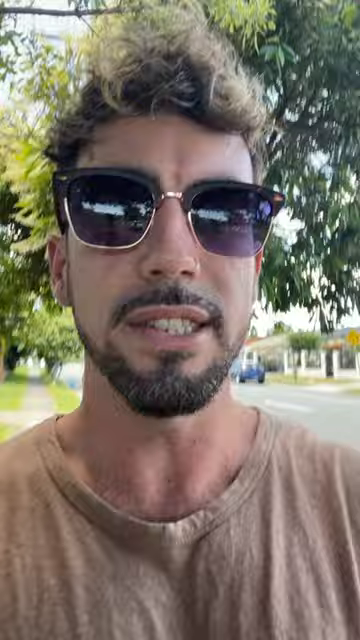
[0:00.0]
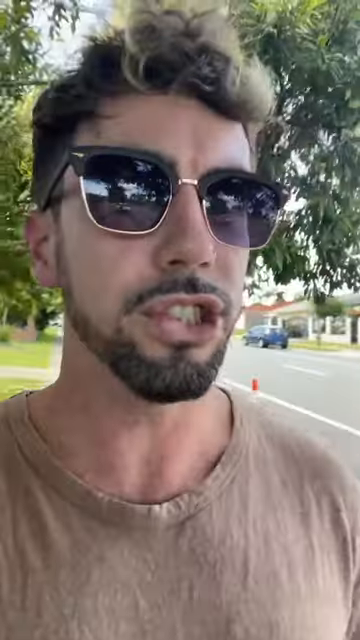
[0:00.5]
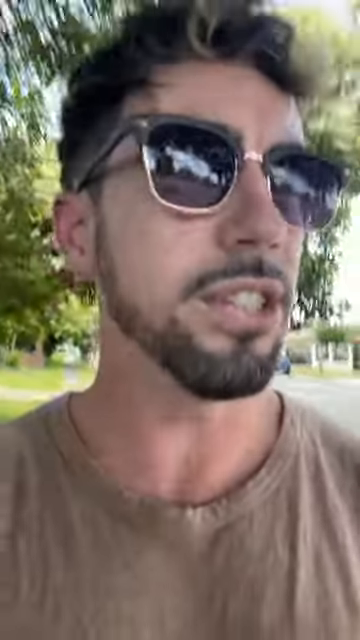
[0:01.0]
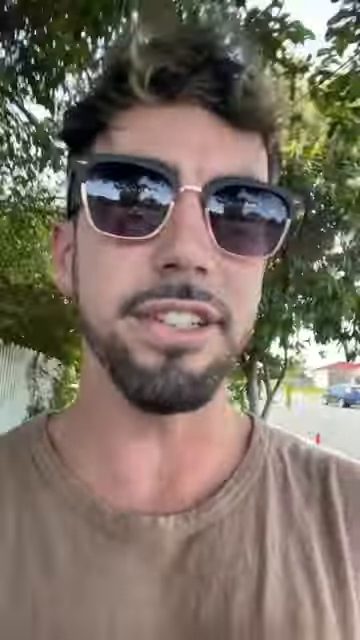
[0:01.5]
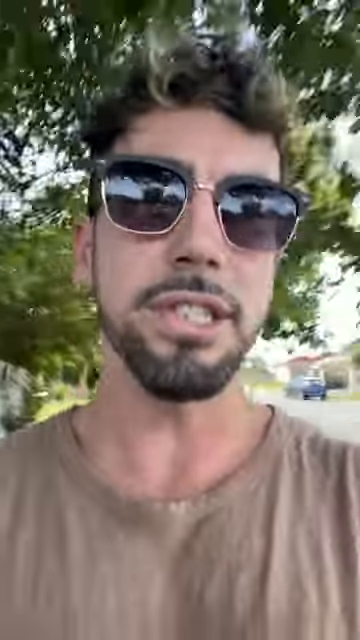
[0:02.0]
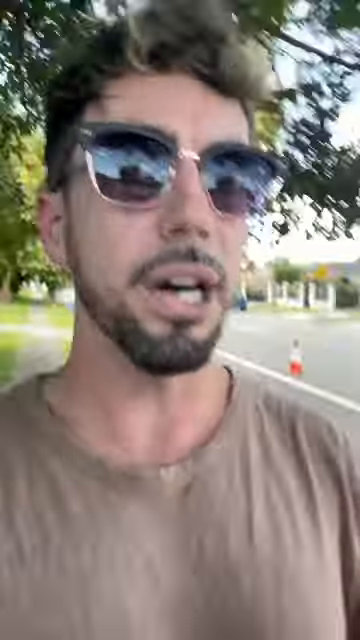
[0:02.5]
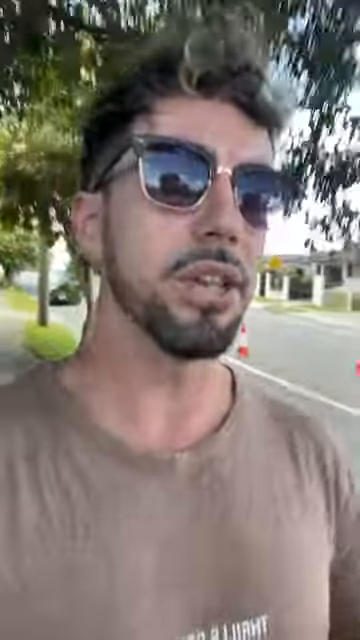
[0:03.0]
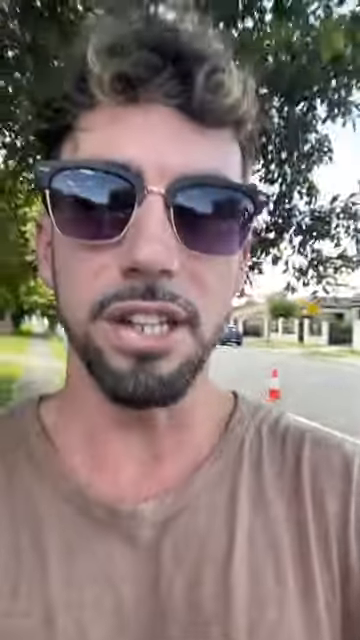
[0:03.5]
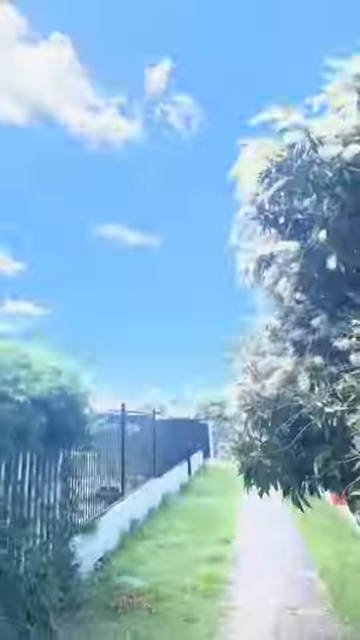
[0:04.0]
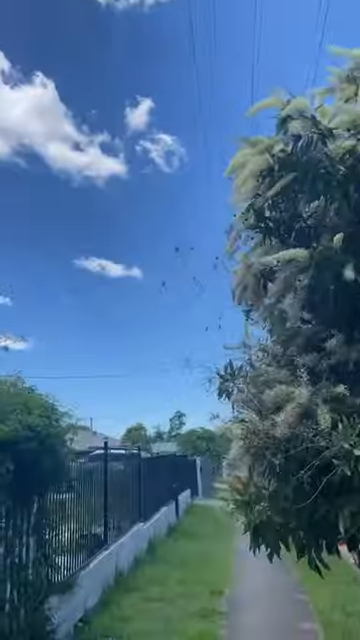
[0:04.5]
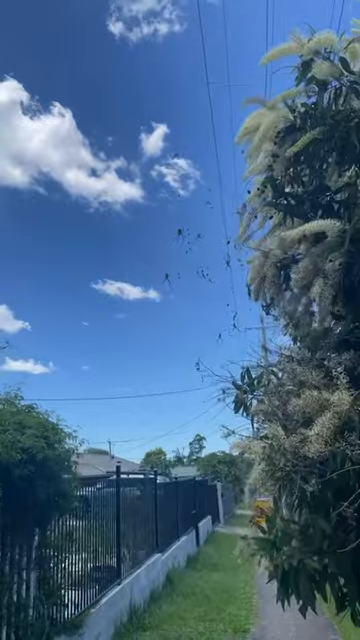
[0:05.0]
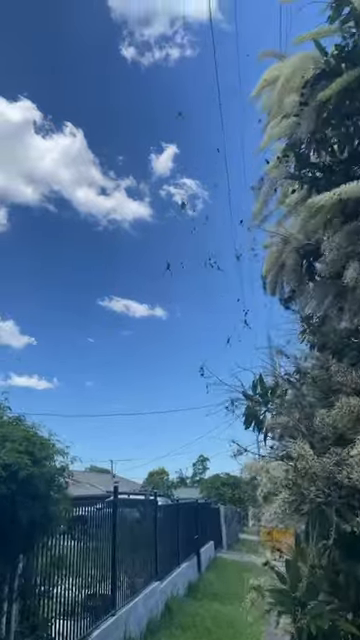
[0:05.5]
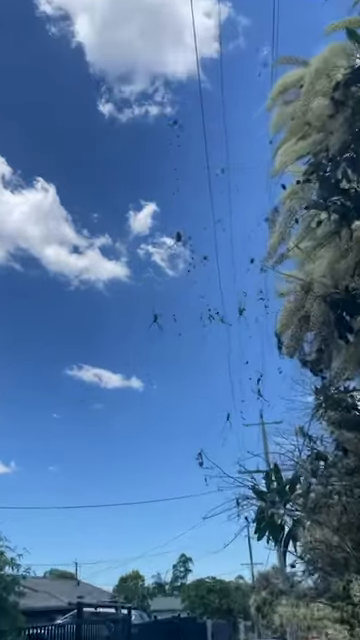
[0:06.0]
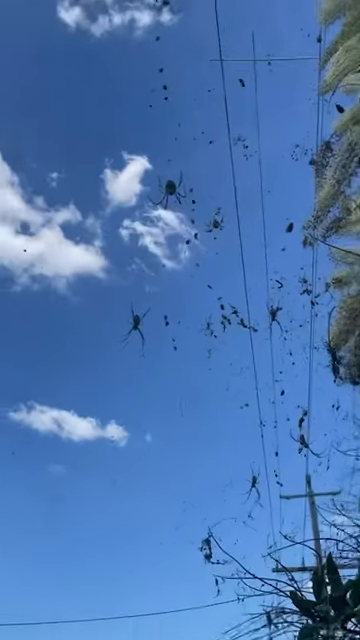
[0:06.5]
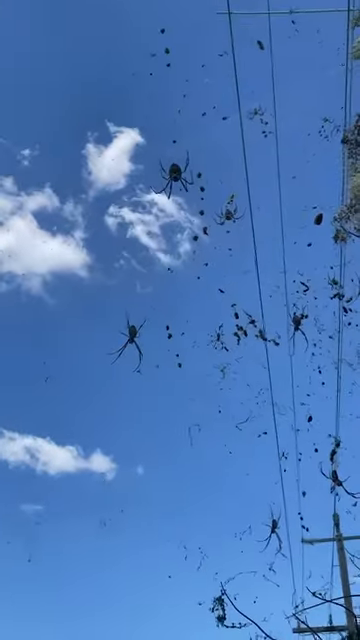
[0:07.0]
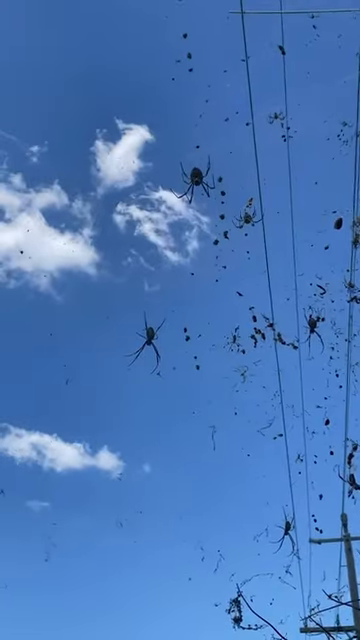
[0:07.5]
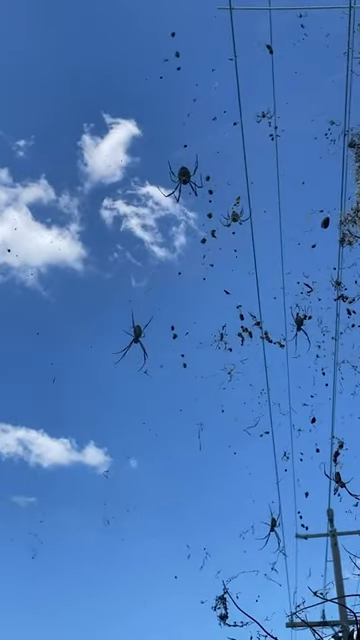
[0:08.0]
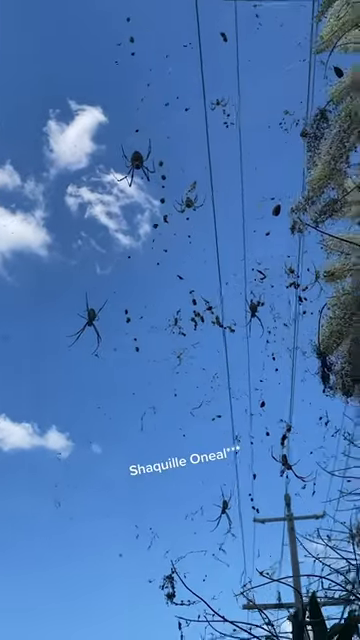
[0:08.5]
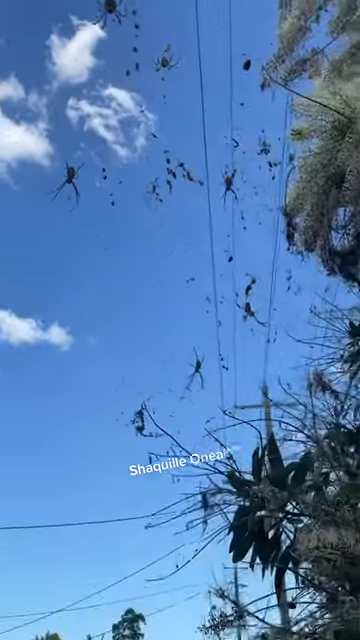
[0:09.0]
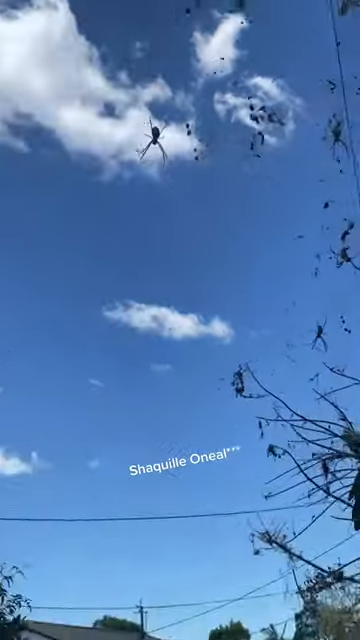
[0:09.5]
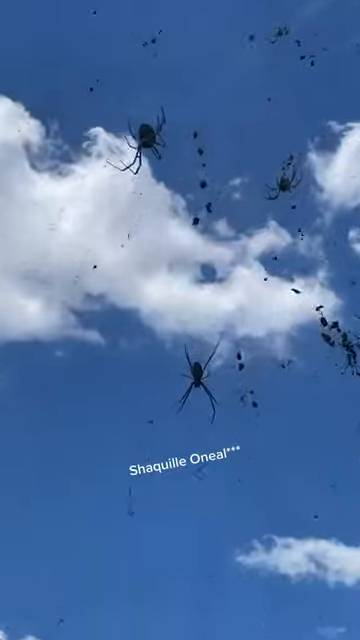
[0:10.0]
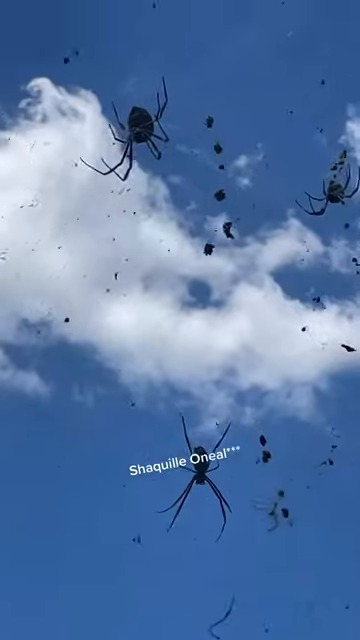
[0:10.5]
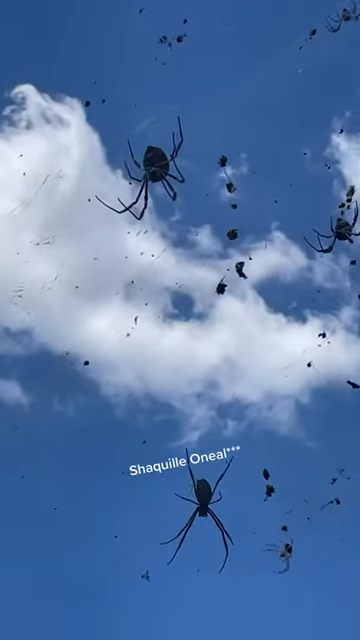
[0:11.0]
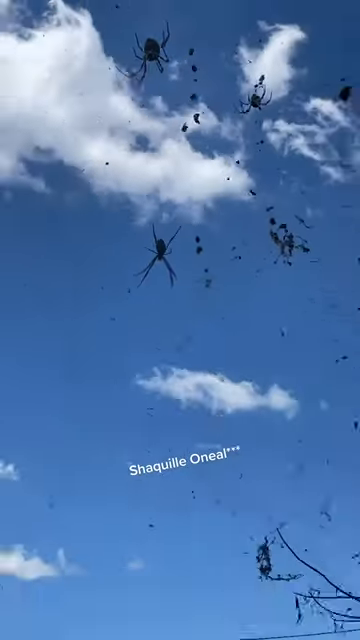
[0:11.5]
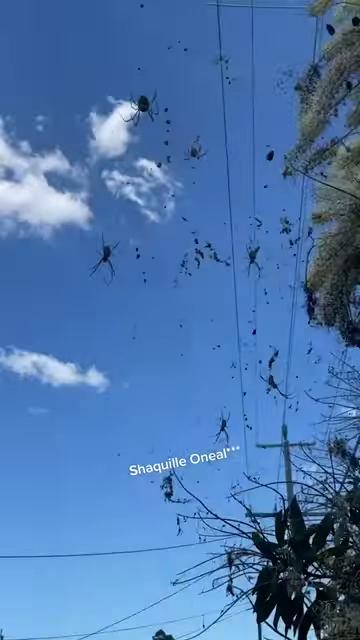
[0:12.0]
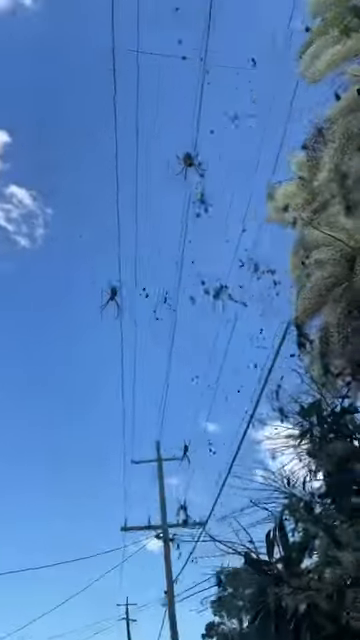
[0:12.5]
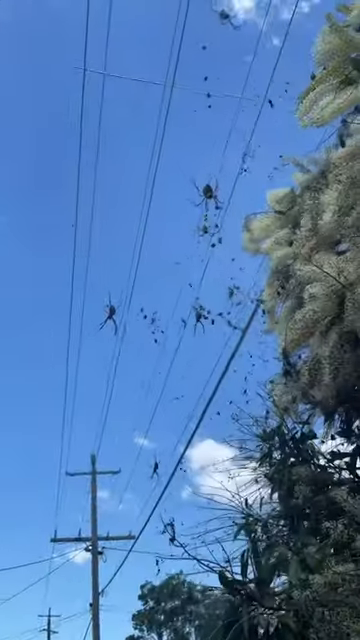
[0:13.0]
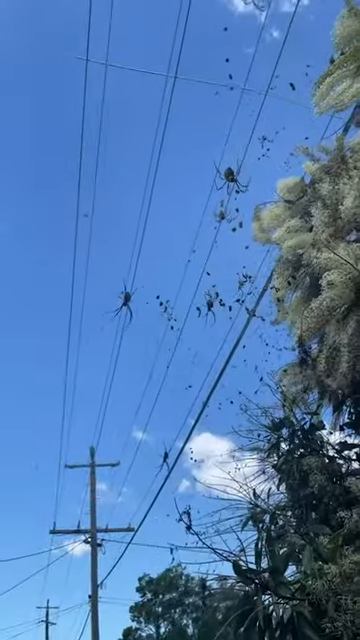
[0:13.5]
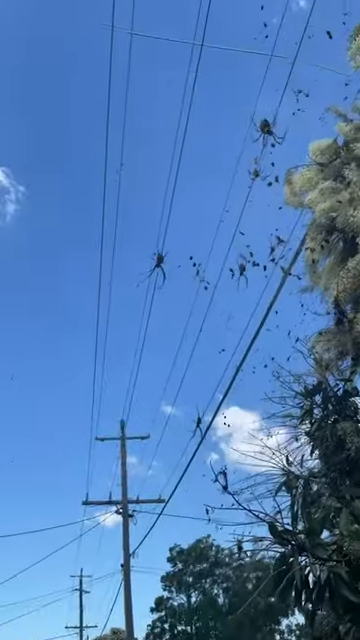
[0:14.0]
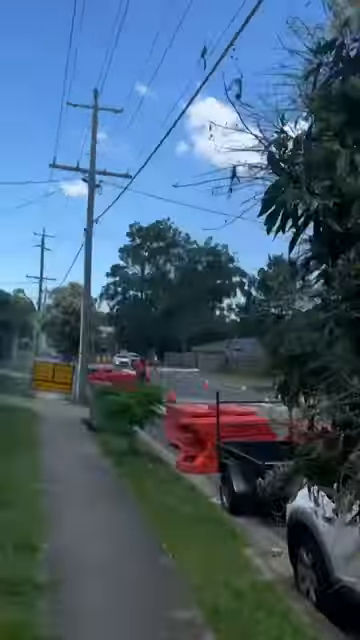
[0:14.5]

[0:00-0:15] An adult man walks outside down what looks like it is perhaps a residential area, filming himself with his front-facing camera. He wears glasses and has a couple of frosted highlights in his hair, plus a short beard, mustache and goatee. His top is a lighter peachish brown tan, apparently a t-shirt, with some white lettering on the front. As he walks and talks, he turns the camera around to show a clear blue sky, then zooms into a couple of power lines going back and forth. Coming off those power lines are clusters of spiders of all different sizes on their webs, hanging overhead. As he walks on, he passes a group of pretty tall trees that have grown over their top.